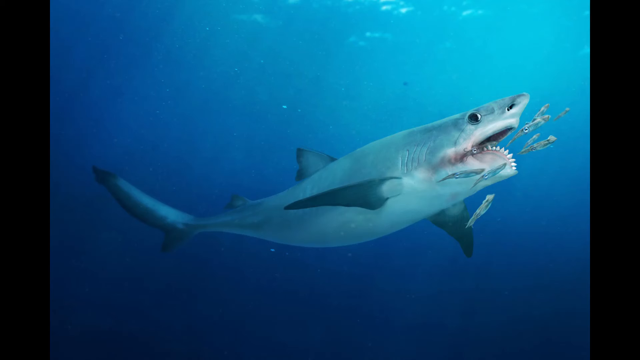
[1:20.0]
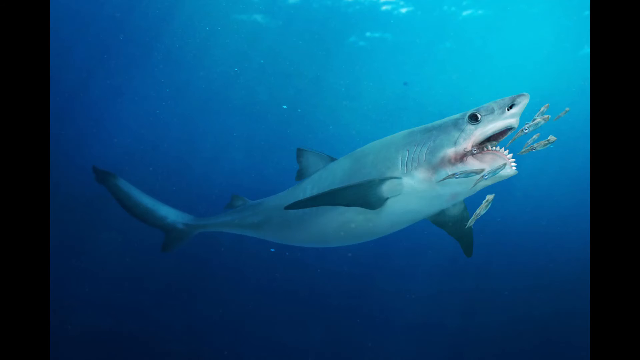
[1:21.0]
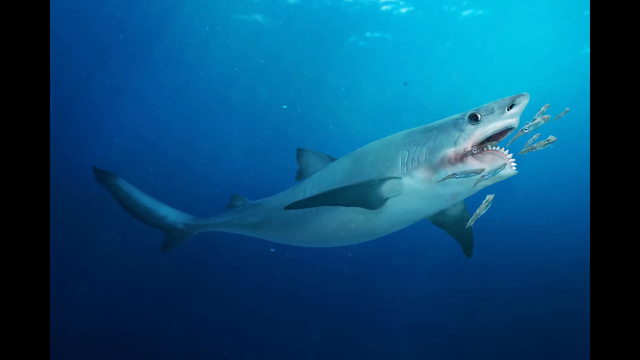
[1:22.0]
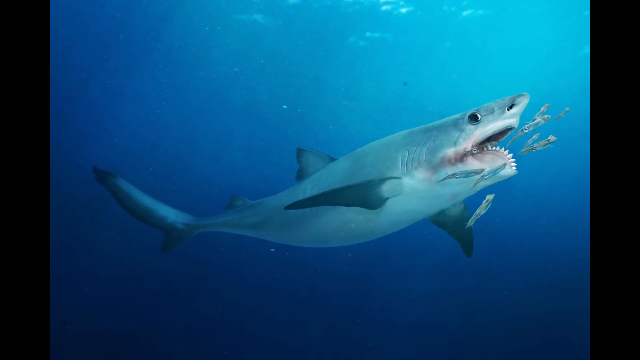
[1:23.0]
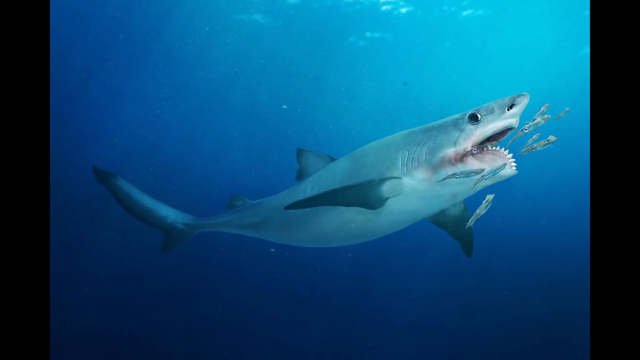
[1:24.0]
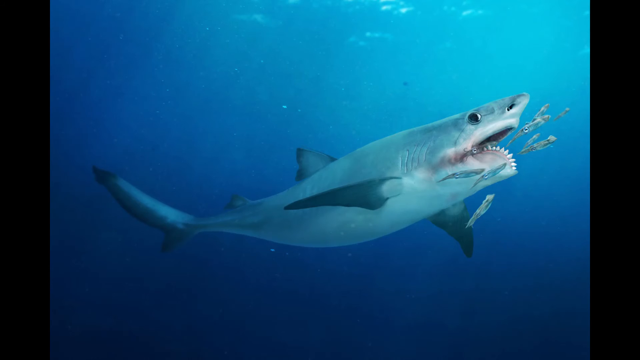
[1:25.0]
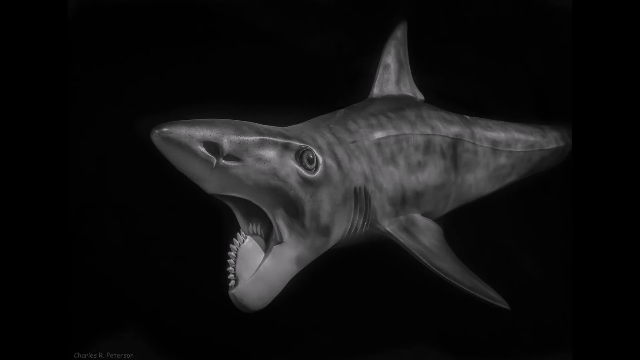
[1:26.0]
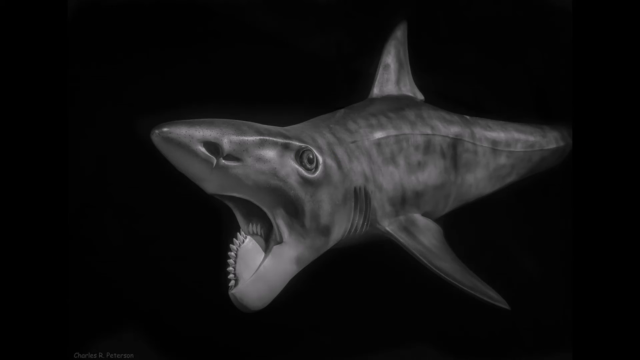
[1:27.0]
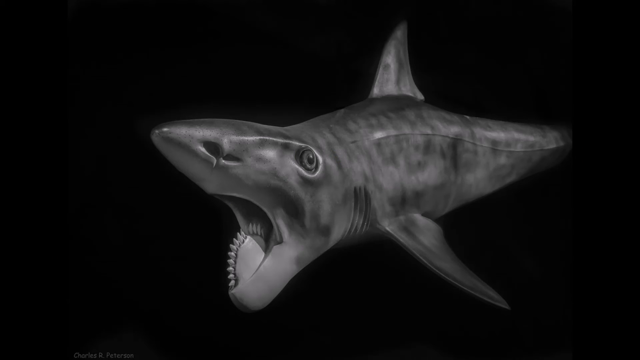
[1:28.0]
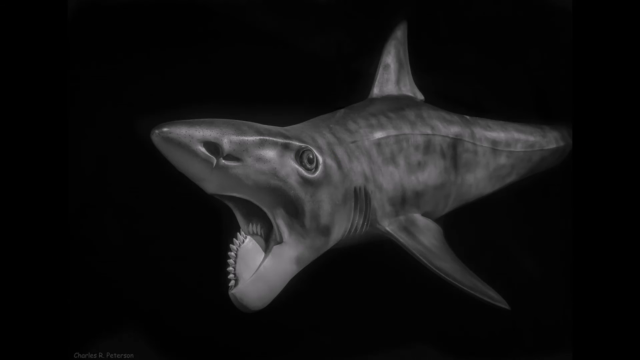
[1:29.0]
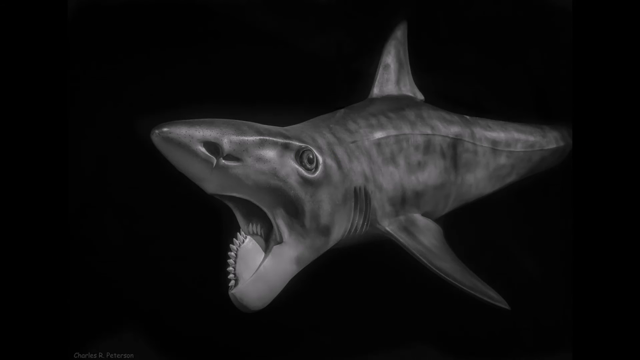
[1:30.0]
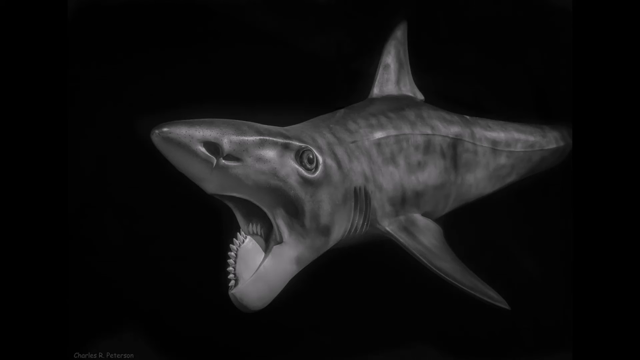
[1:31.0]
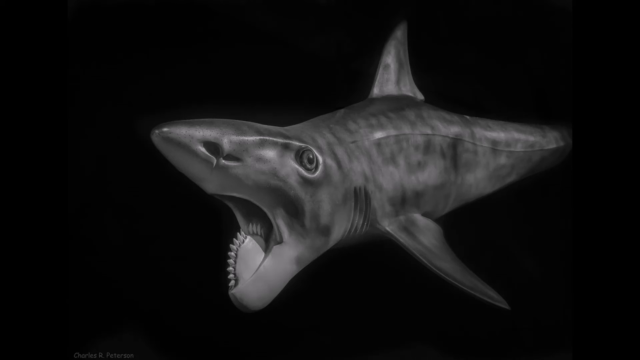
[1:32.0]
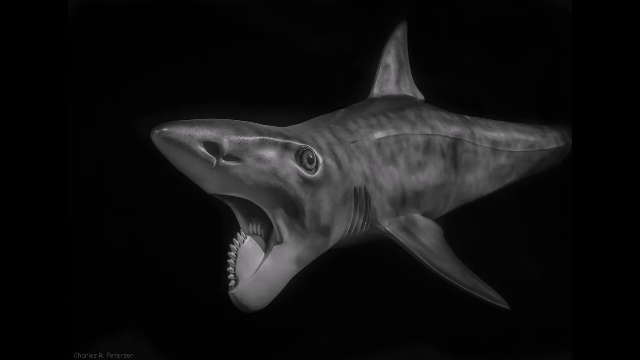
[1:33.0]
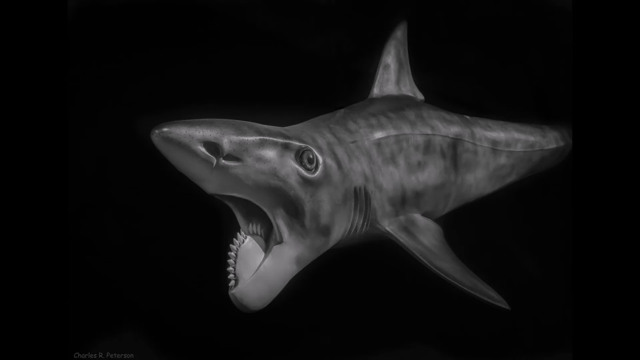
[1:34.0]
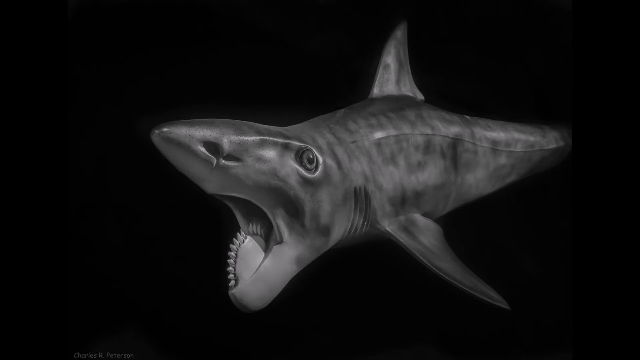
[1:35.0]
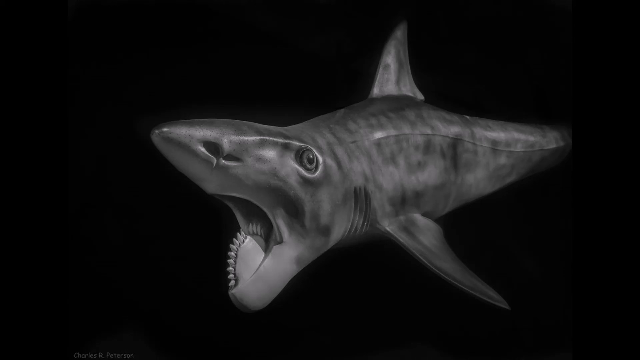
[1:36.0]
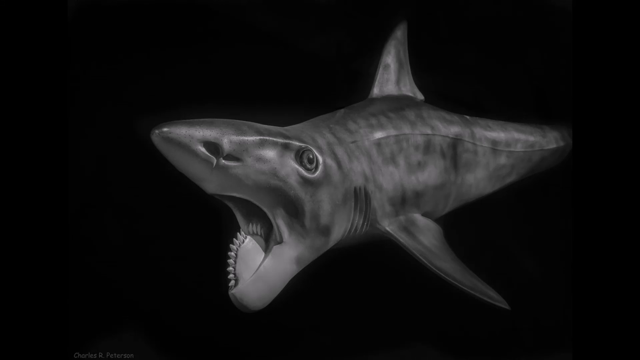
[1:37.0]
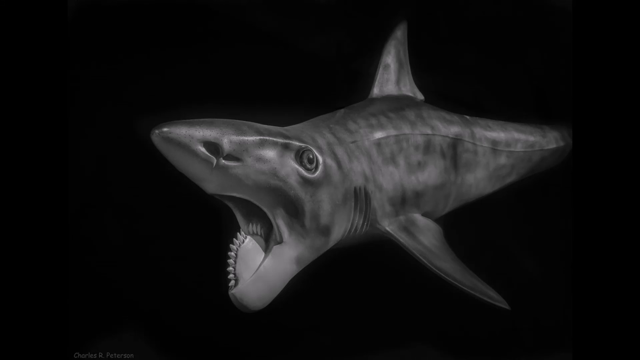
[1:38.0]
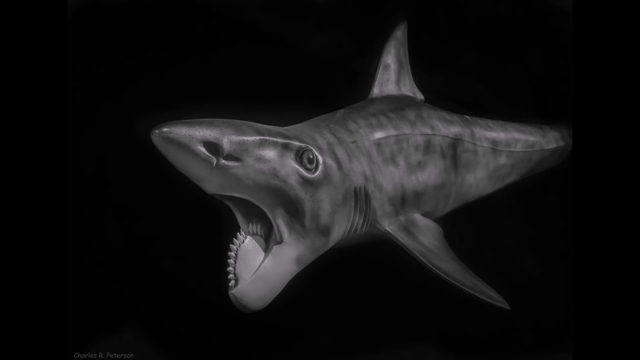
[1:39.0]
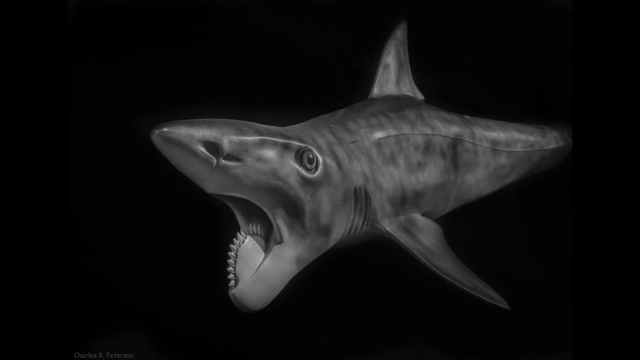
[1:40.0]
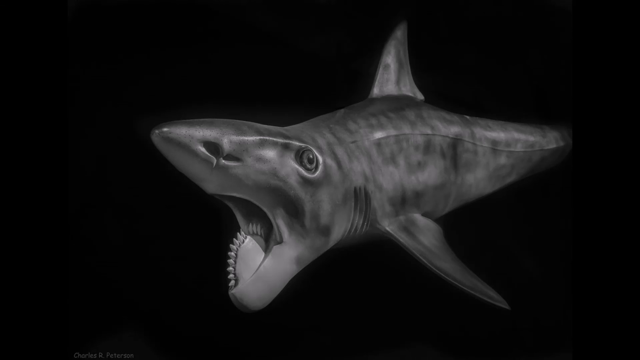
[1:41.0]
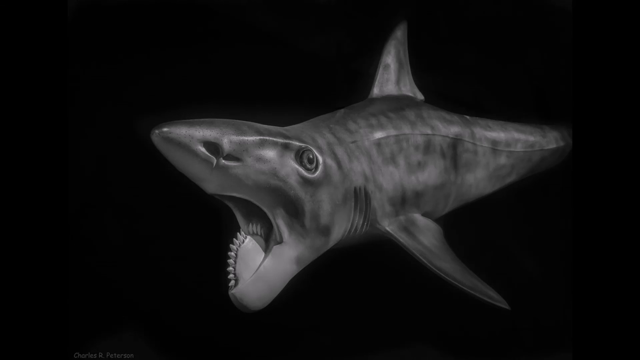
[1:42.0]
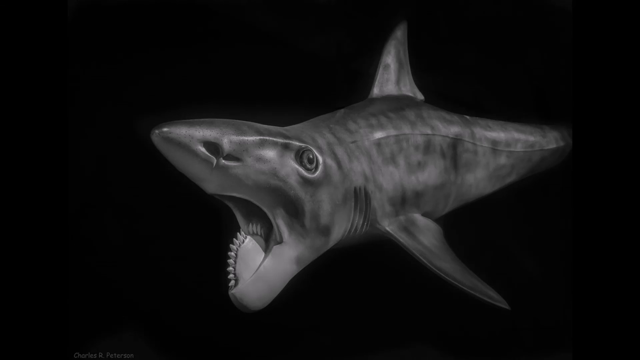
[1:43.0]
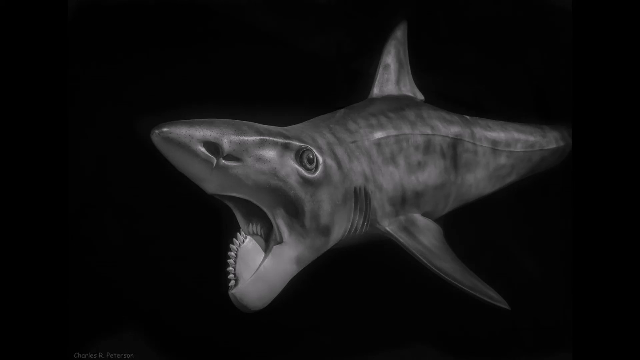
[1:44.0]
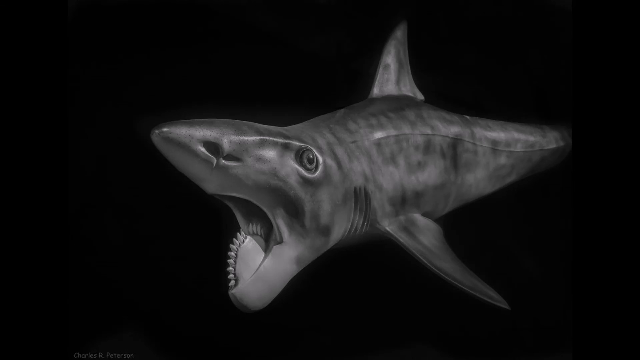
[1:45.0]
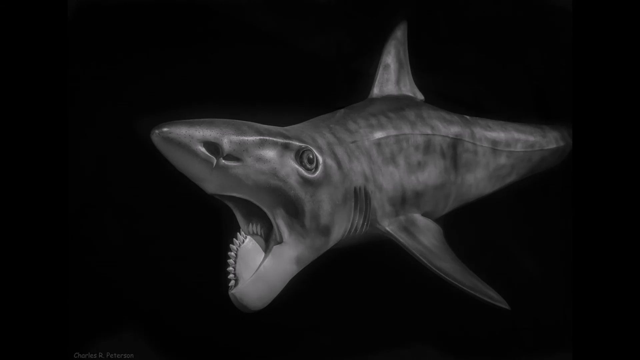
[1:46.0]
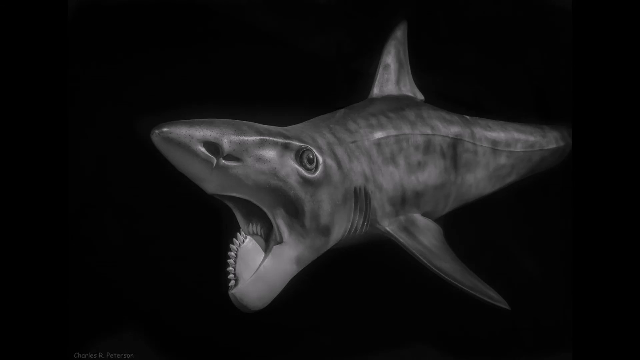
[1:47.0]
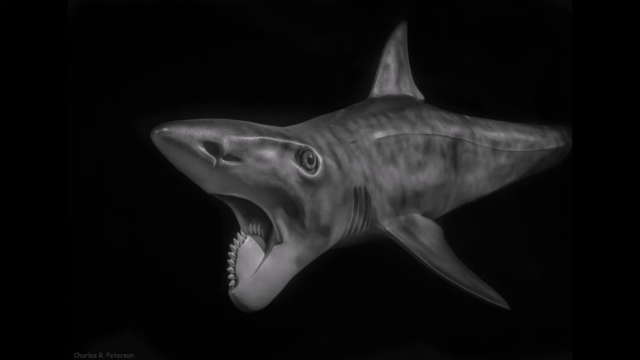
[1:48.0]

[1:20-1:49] A shark is in the water, and there appear to be a bunch of little sharks around it. After it is shown in the real water, a black shark silhouette appears with its mouth open, showing its teeth, its fins, a big eye, three or four lines on the side of its body for breathing, and a pointed nose. Then the video goes back to the shark in the water, with about five, or possibly seven, fish around it. Its top fin, its left fin, and its mouth full of teeth are visible.